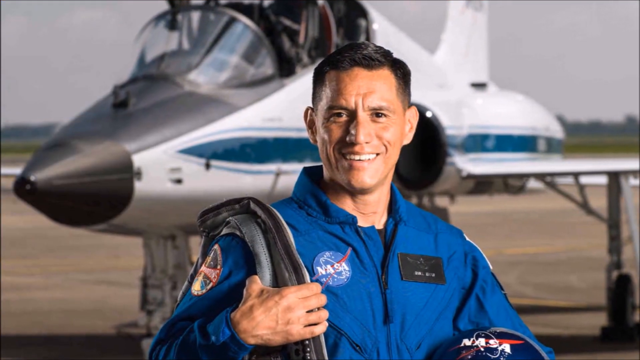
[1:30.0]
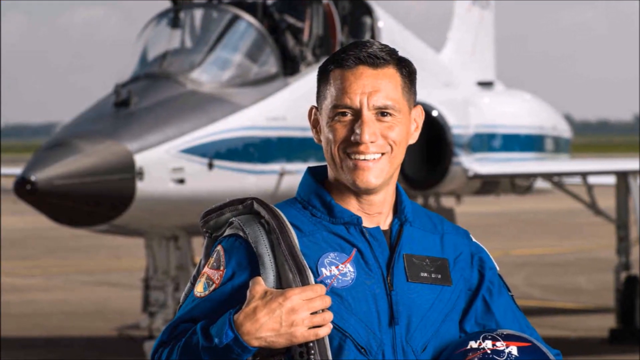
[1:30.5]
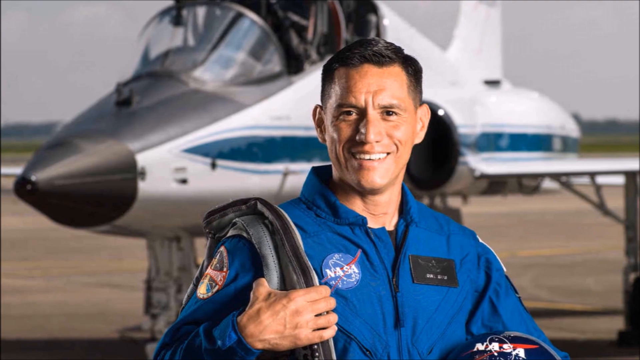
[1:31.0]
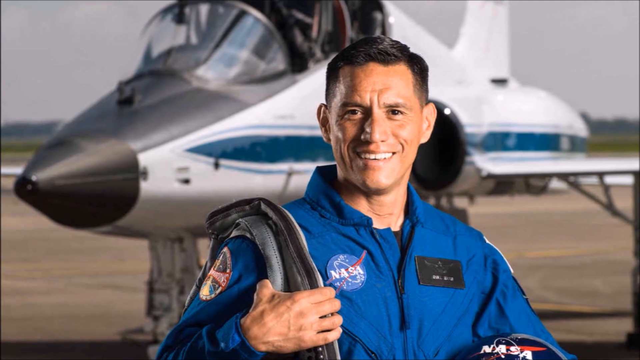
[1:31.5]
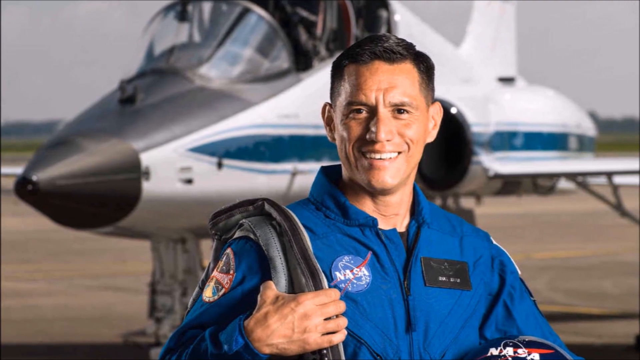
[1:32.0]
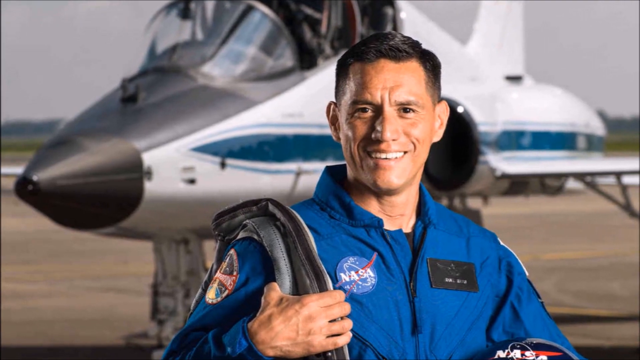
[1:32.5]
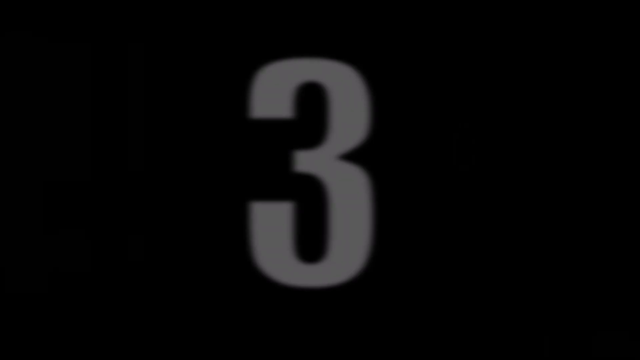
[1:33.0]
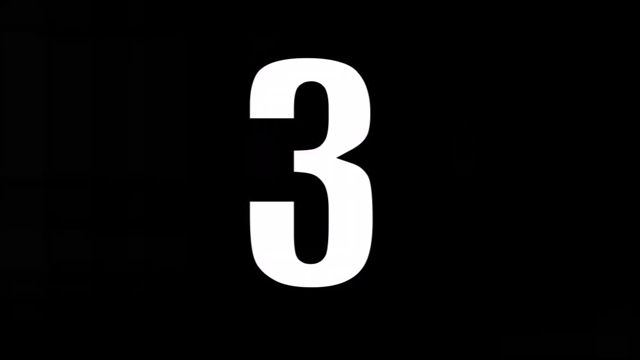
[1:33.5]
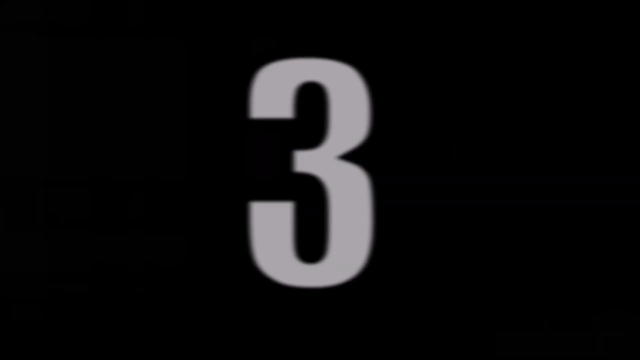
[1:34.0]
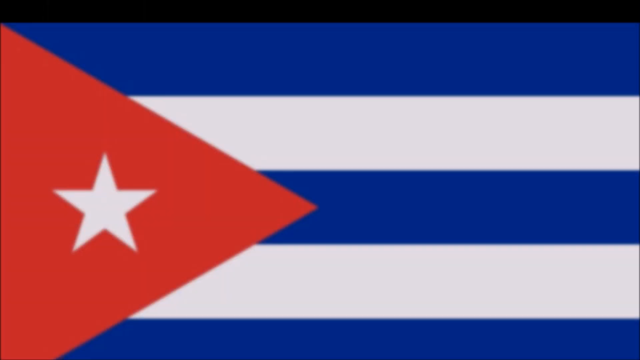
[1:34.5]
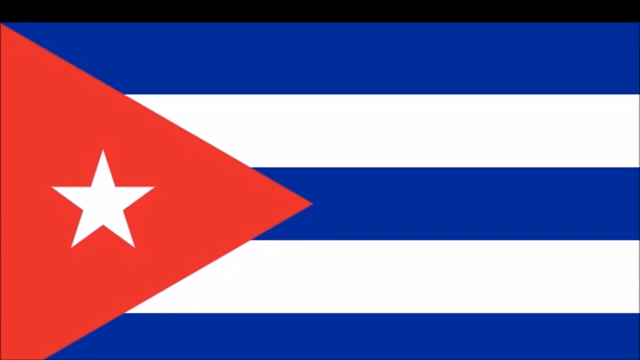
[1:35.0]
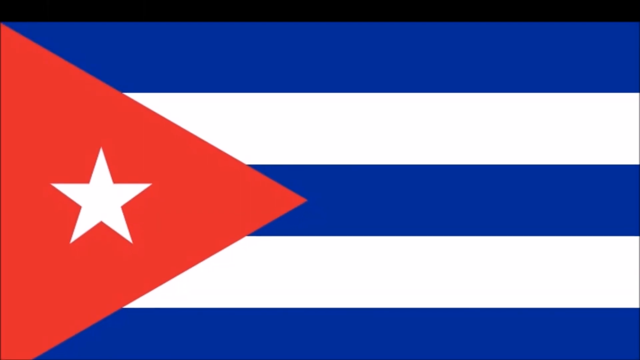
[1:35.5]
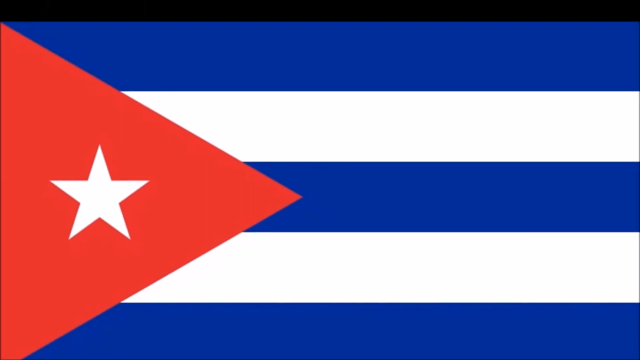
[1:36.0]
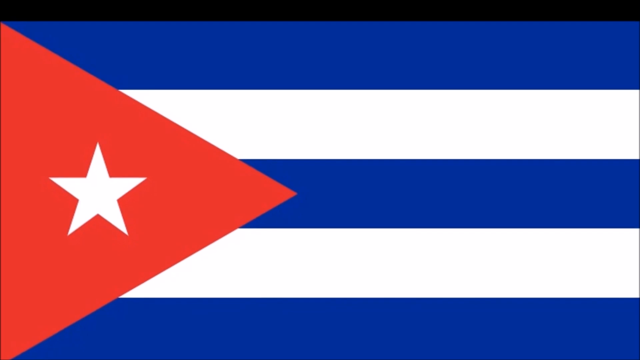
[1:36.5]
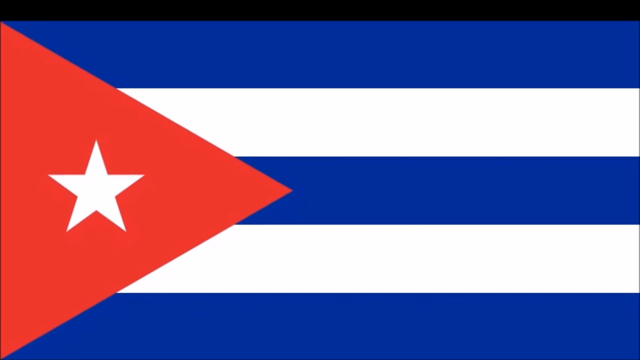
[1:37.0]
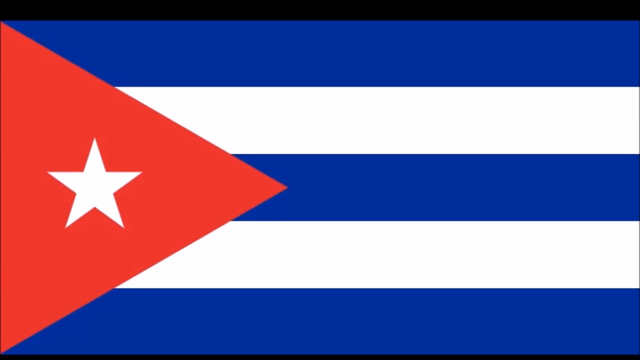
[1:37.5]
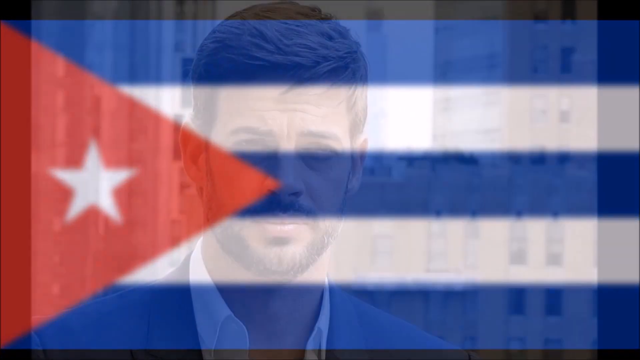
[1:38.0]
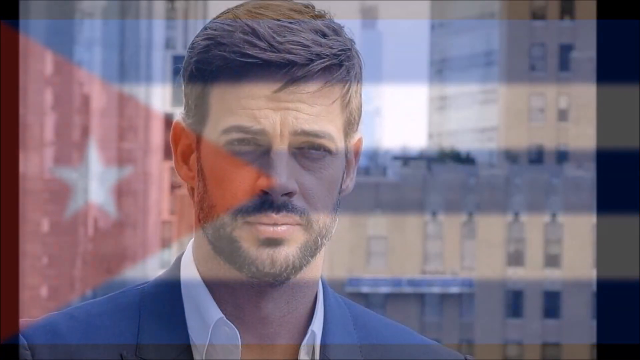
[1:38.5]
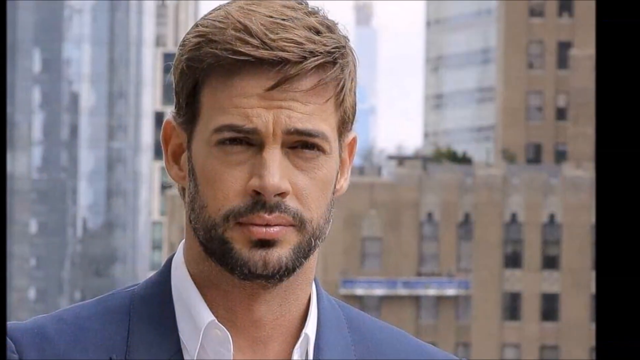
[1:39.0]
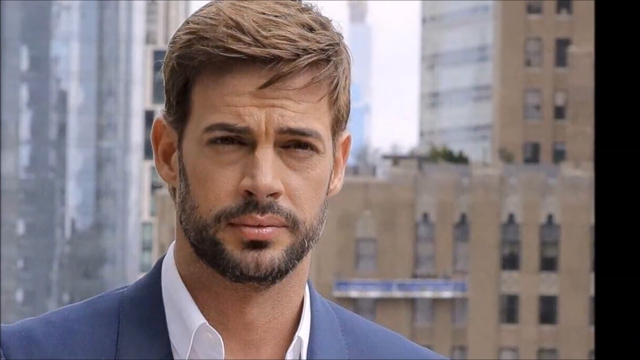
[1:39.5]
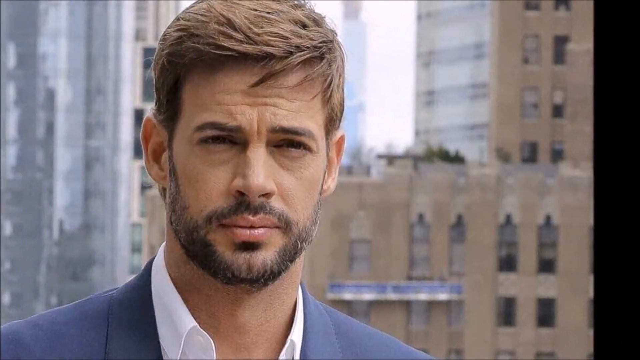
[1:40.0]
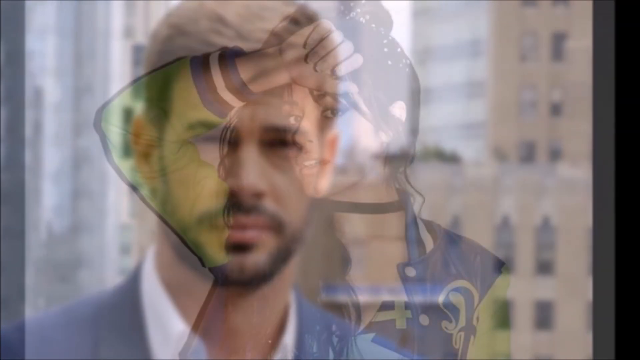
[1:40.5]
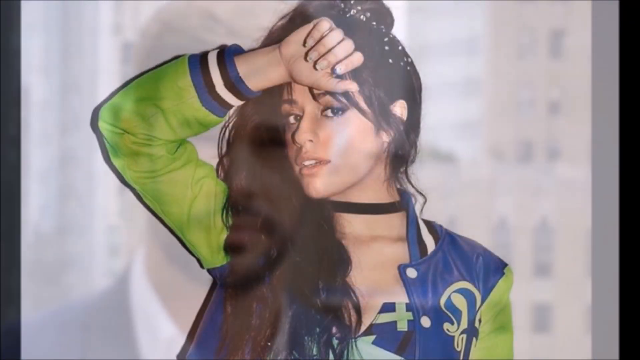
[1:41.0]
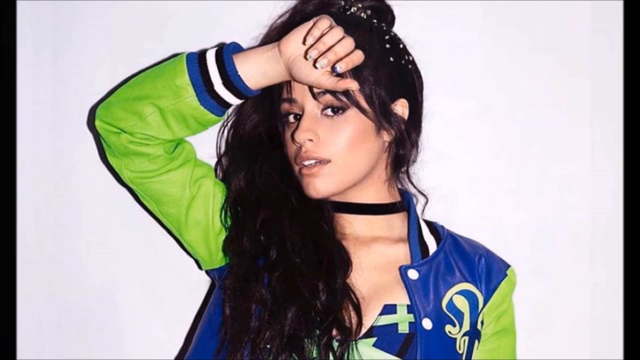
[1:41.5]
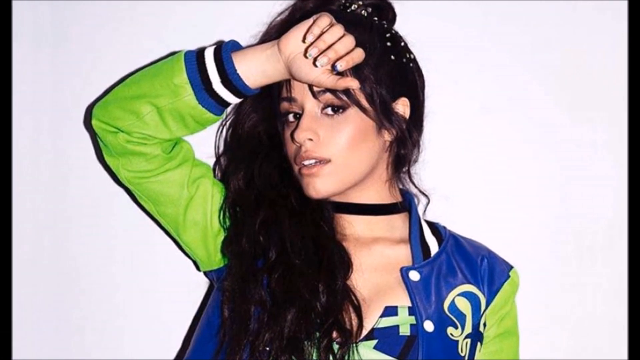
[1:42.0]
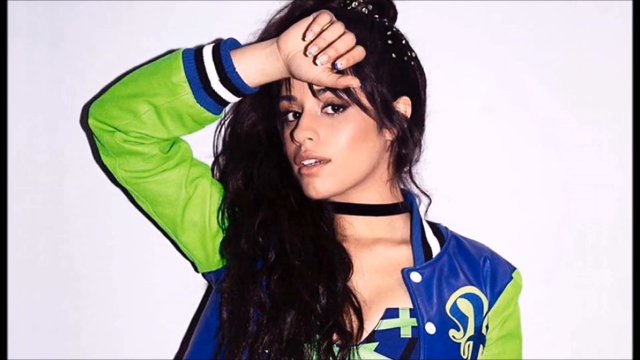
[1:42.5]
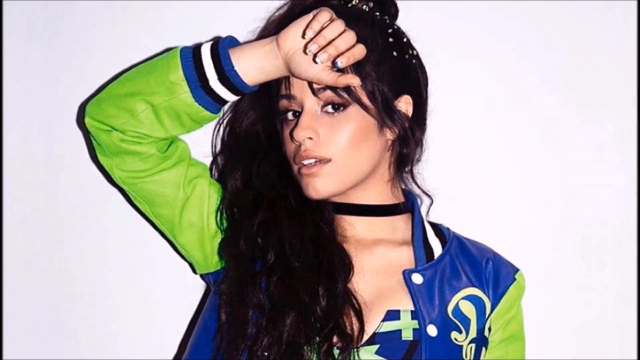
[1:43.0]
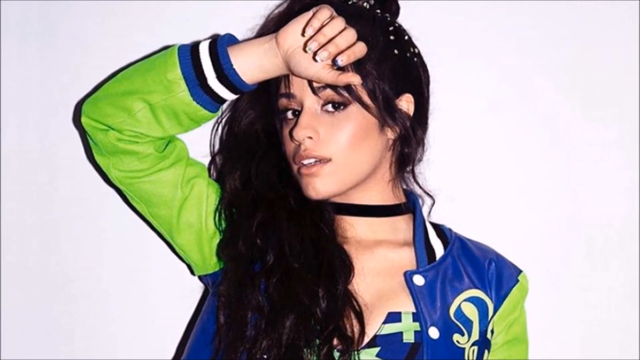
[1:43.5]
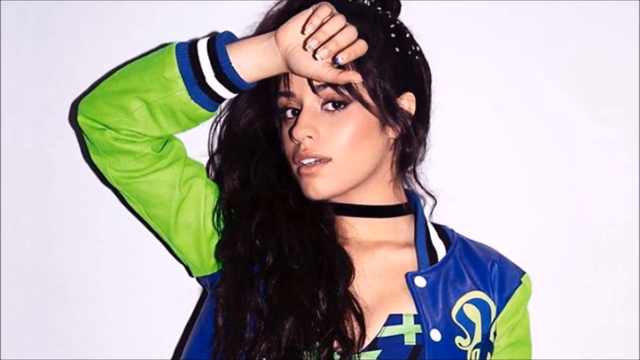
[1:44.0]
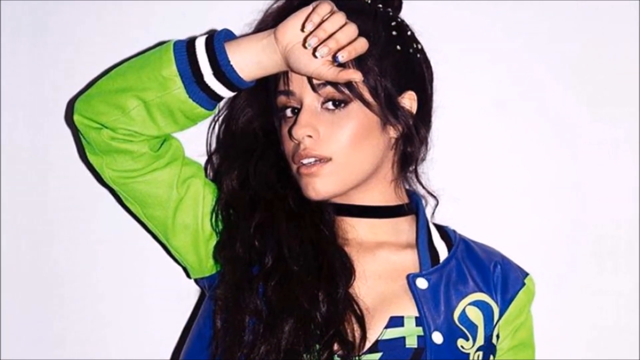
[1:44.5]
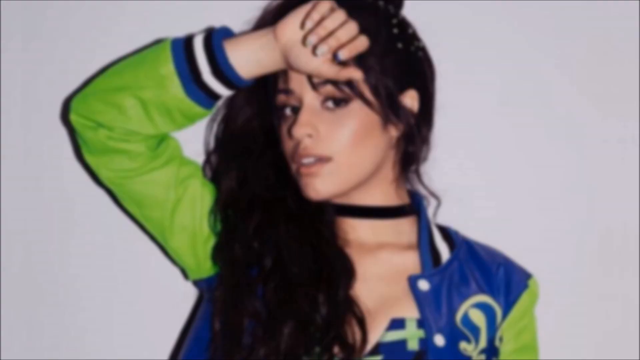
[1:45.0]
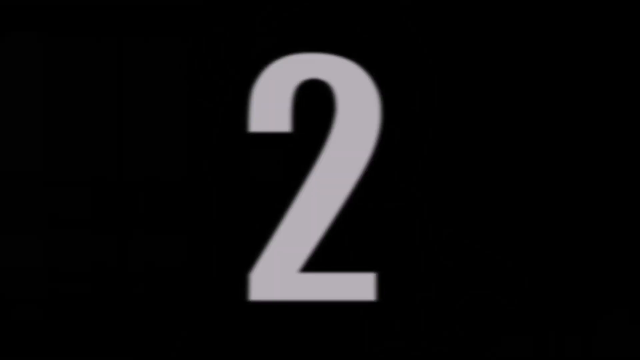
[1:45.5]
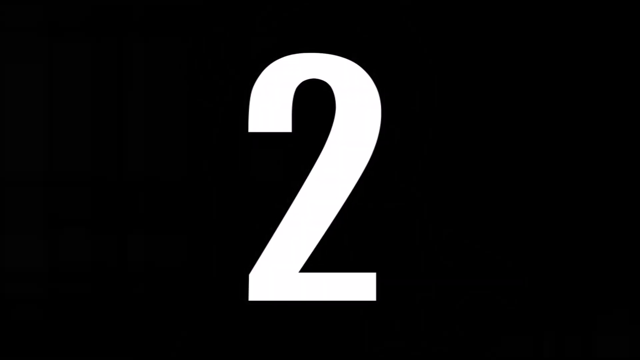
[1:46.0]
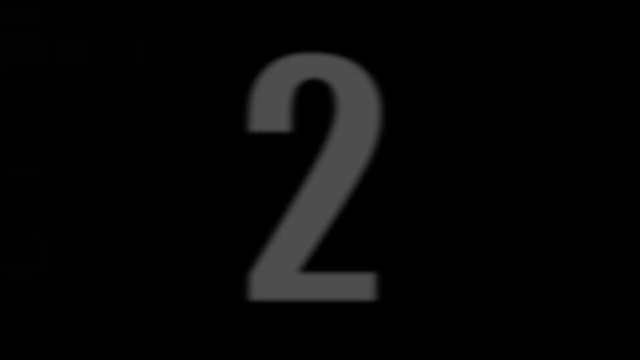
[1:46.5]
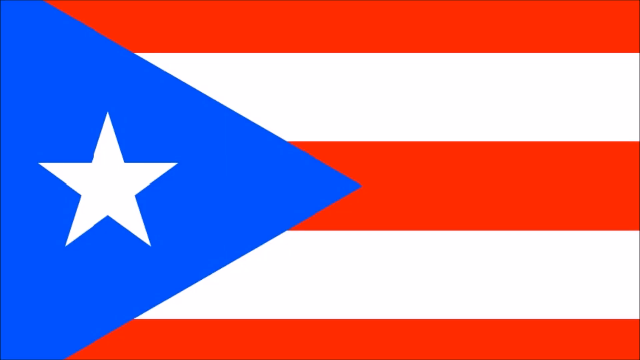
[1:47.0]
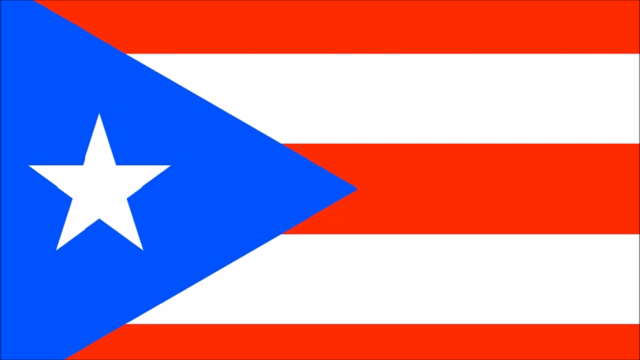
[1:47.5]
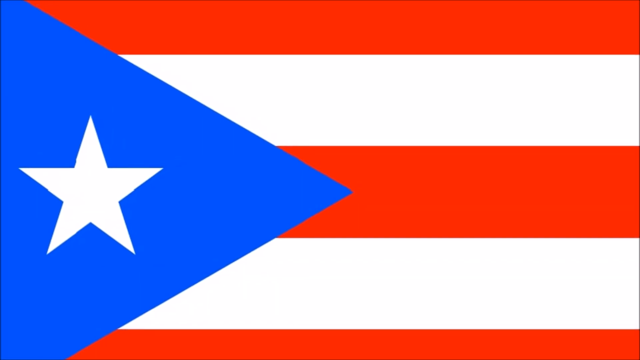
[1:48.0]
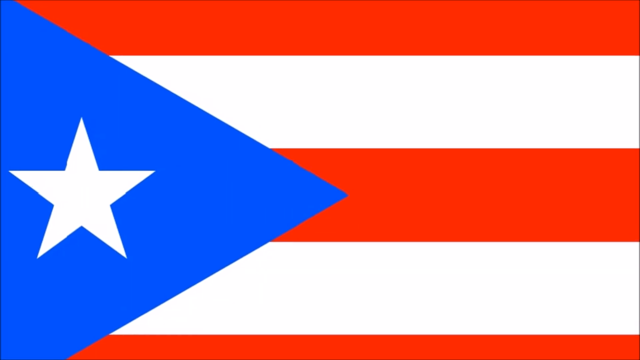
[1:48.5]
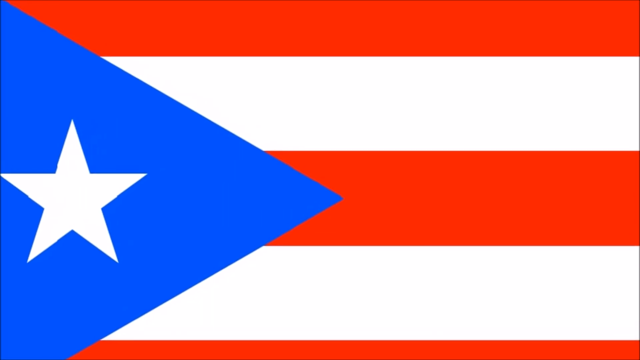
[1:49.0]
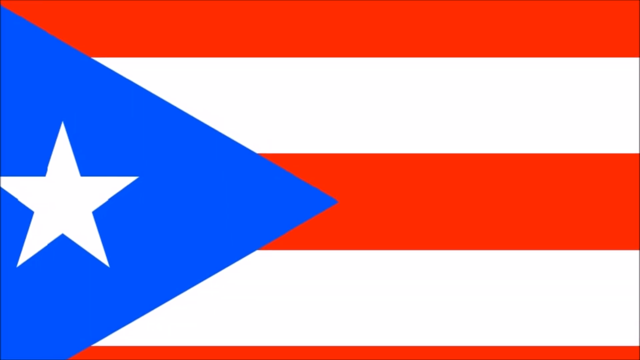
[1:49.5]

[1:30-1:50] A photograph shows a man wearing a blue NASA jacket, with the NASA emblem on the right. He holds something over his right shoulder and looks straight ahead, smiling. He has black hair and tan skin, and a fighter jet is parked behind him on a tarmac. The number 3 then appears against a black background, followed by a close-up of the Puerto Rican flag, with five alternating blue and white bars and a red triangle with a white star on the left. Next is a close-up of a man looking straight ahead, not smiling, with slightly long brown hair hanging a little over his forehead and a beard and mustache. A photograph of a woman with long black hair follows; she wears a blue and lime green jacket and has her right hand up over her forehead. The number 2 then appears against a black background, followed by a brief shot of the Cuban flag.